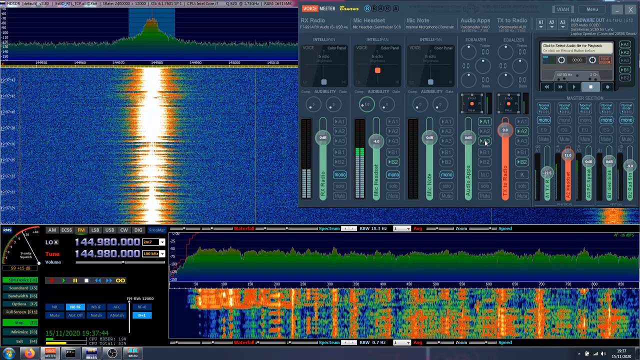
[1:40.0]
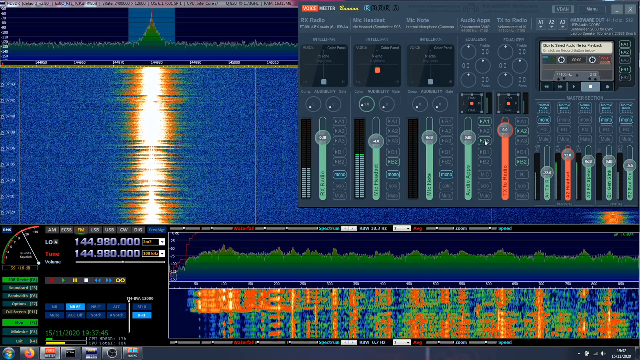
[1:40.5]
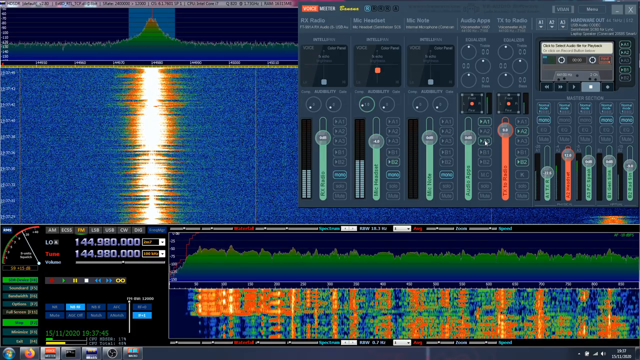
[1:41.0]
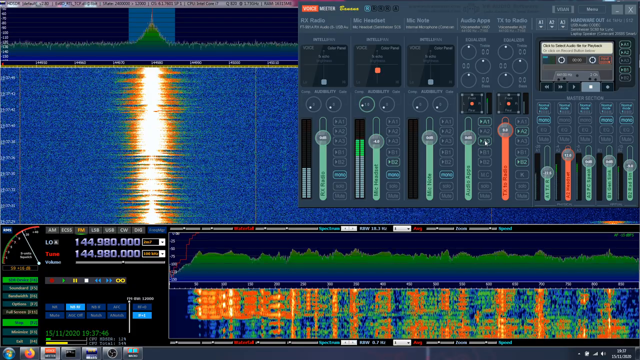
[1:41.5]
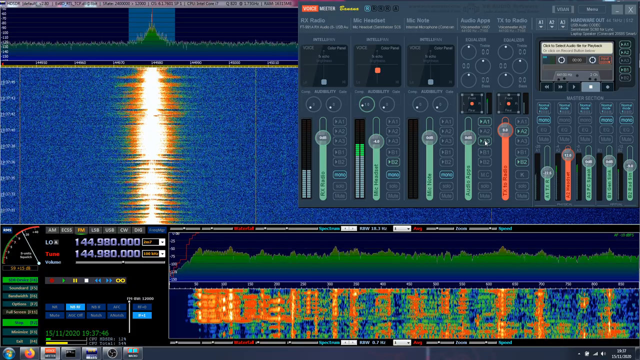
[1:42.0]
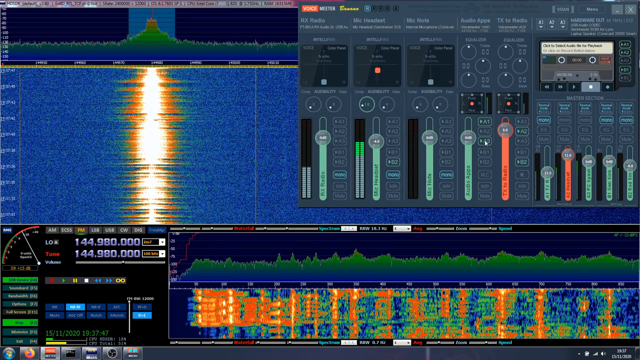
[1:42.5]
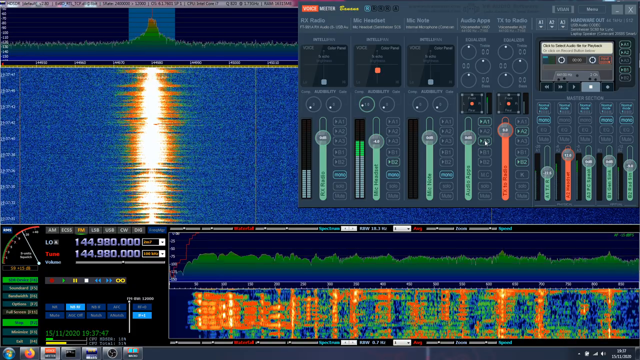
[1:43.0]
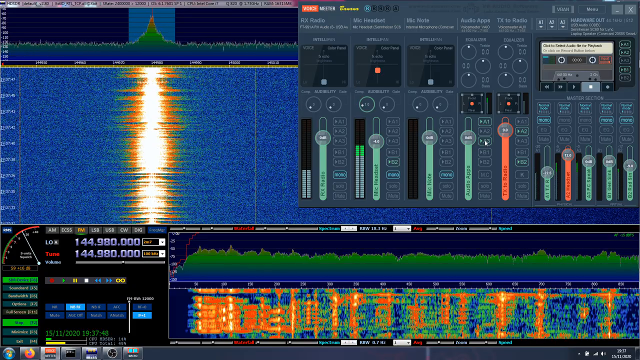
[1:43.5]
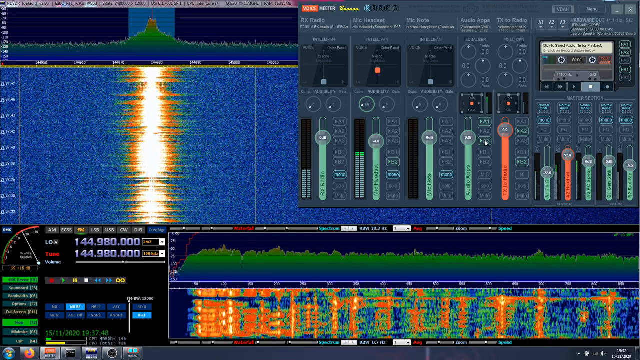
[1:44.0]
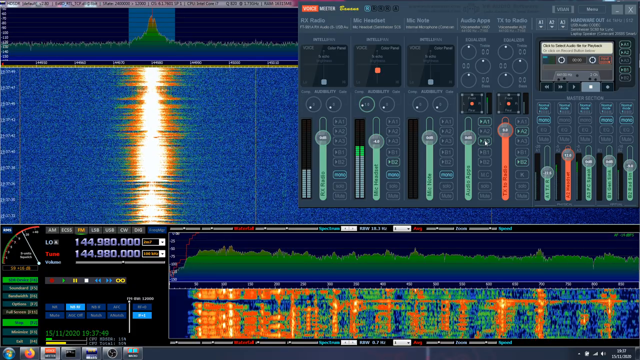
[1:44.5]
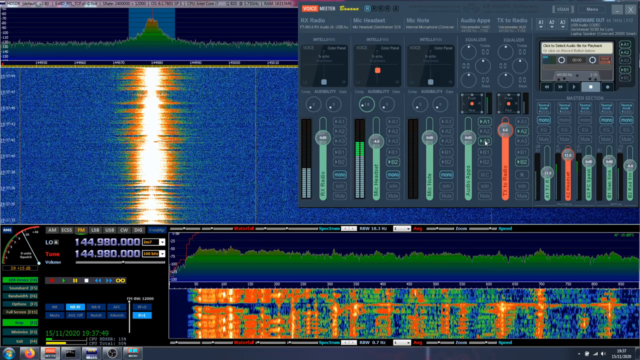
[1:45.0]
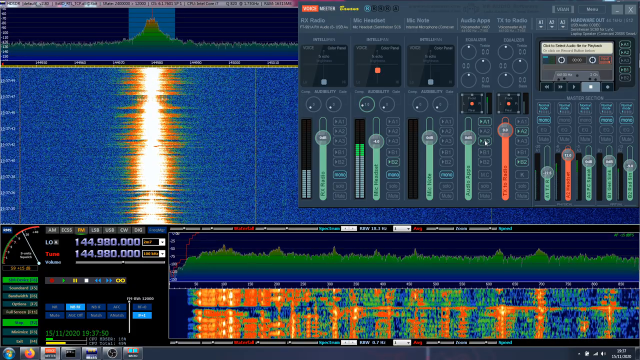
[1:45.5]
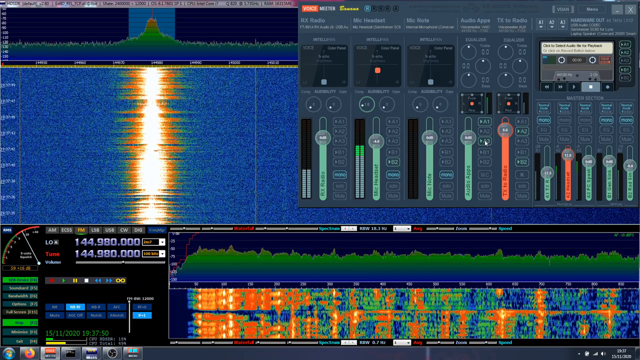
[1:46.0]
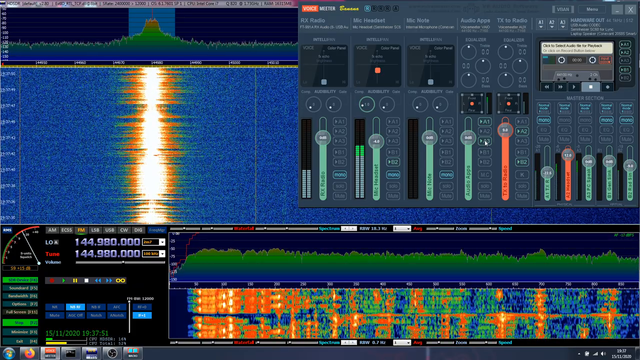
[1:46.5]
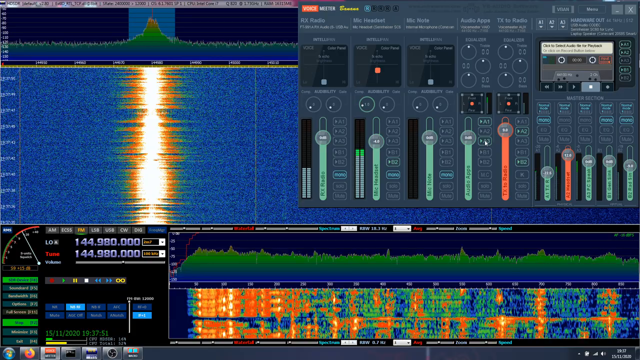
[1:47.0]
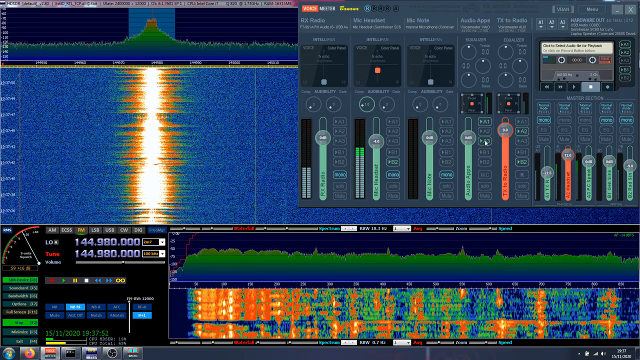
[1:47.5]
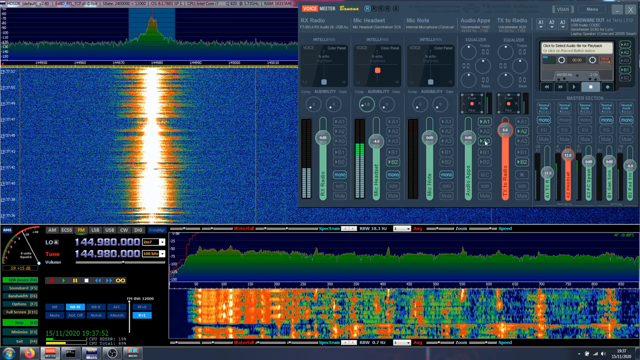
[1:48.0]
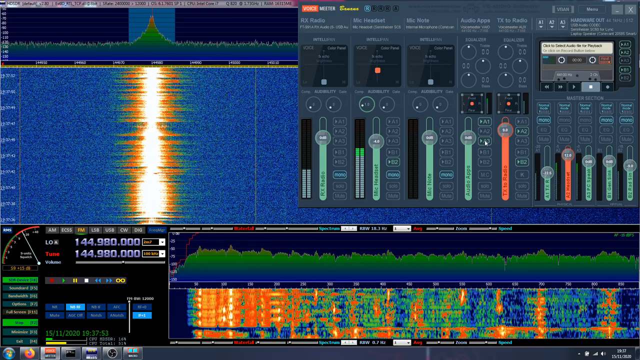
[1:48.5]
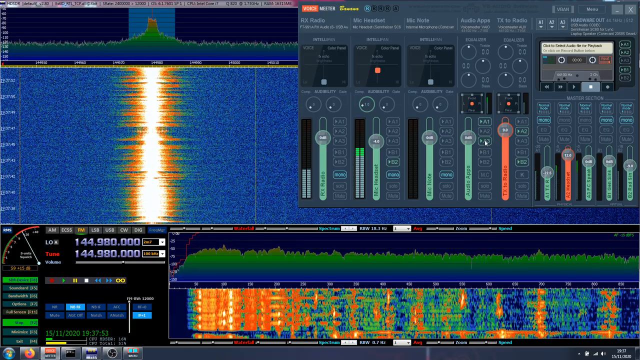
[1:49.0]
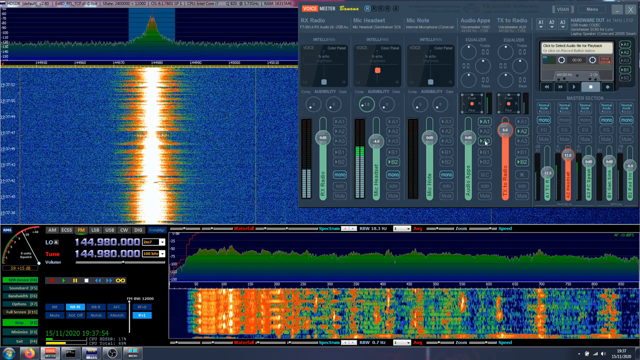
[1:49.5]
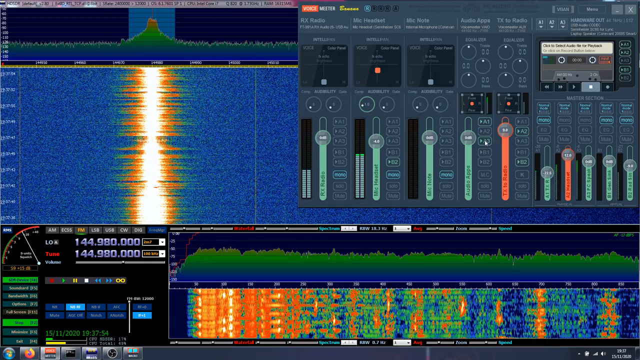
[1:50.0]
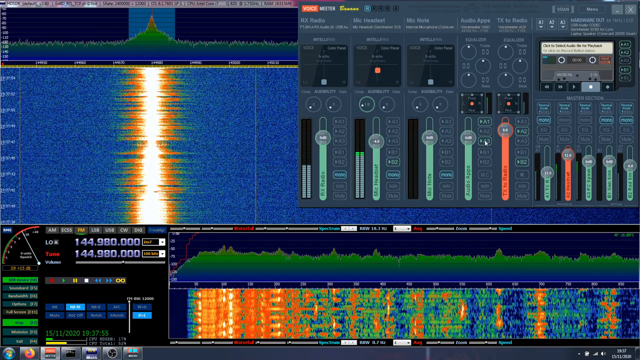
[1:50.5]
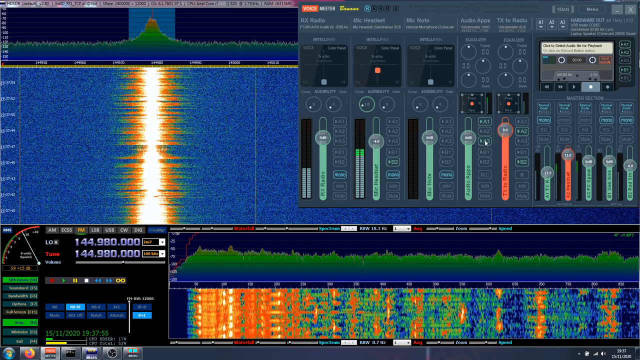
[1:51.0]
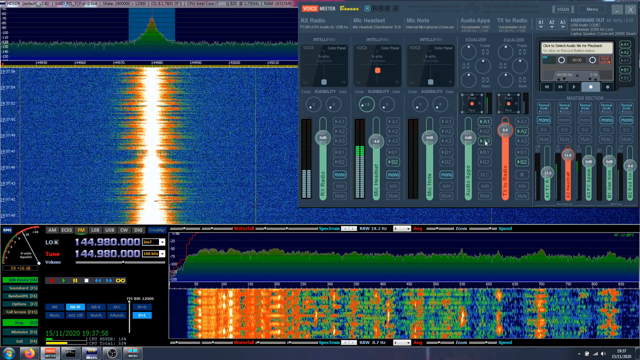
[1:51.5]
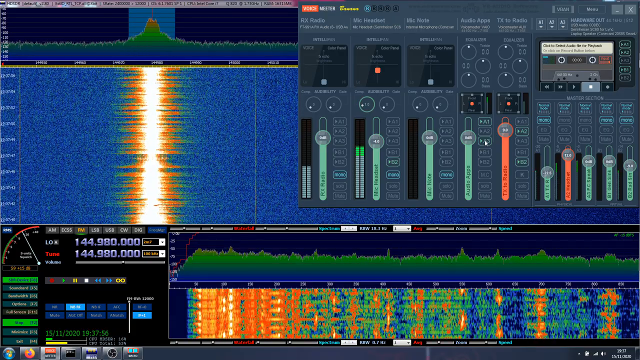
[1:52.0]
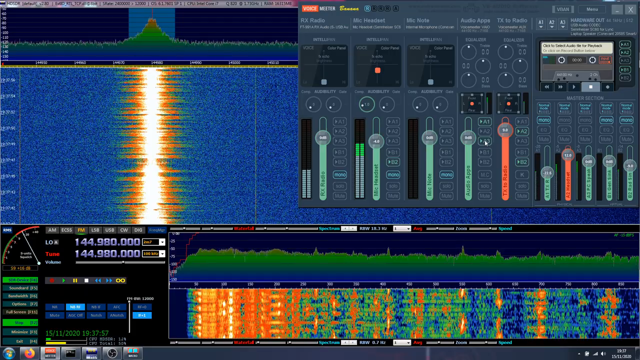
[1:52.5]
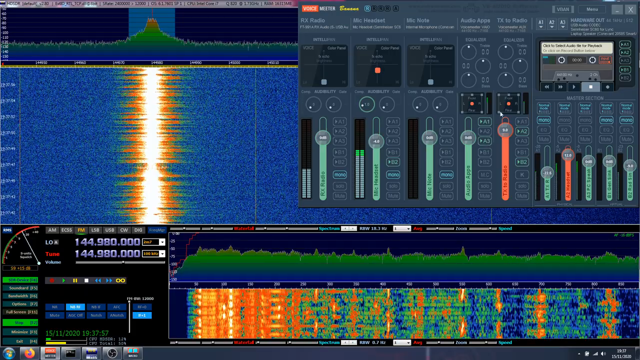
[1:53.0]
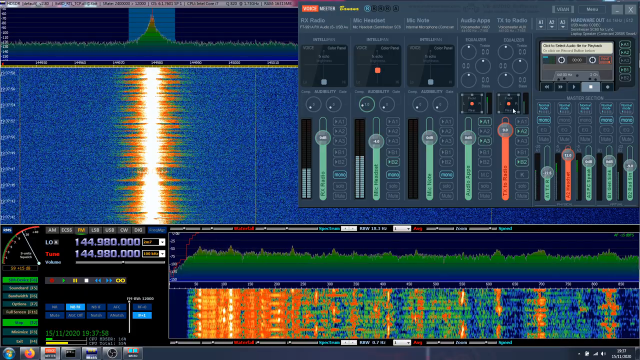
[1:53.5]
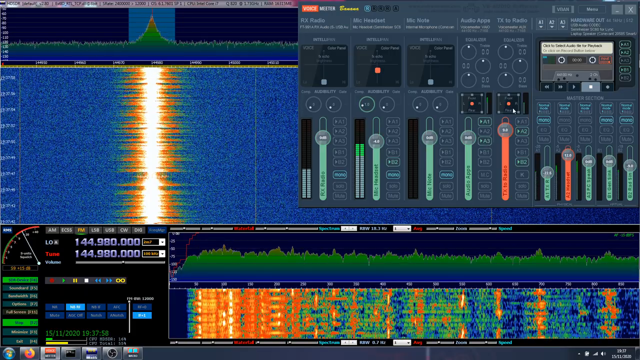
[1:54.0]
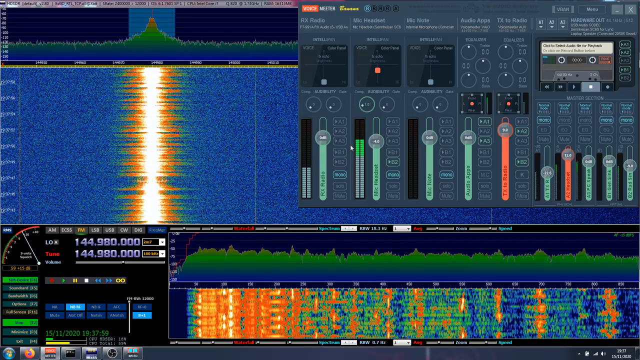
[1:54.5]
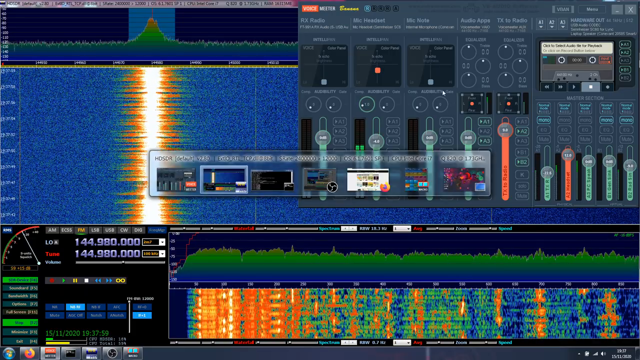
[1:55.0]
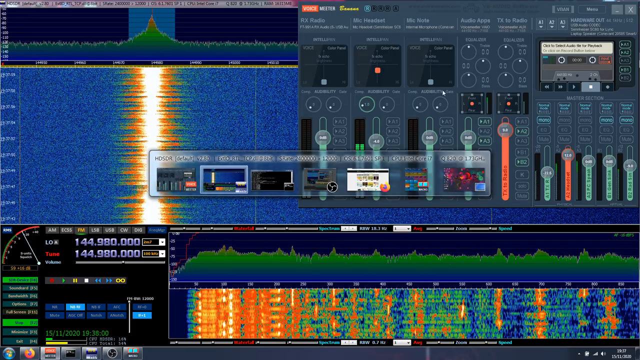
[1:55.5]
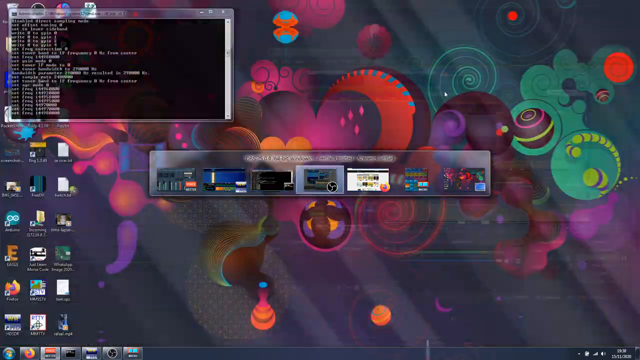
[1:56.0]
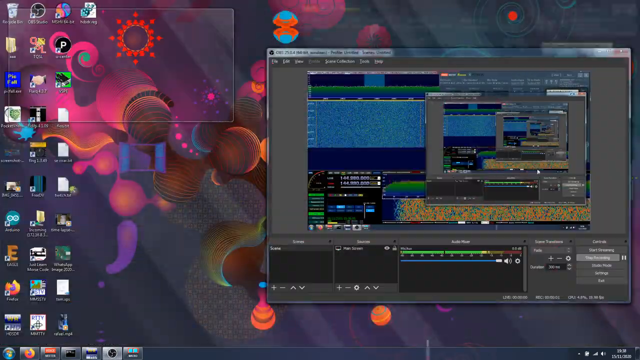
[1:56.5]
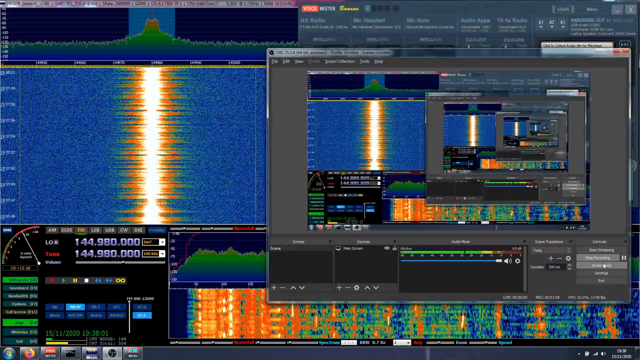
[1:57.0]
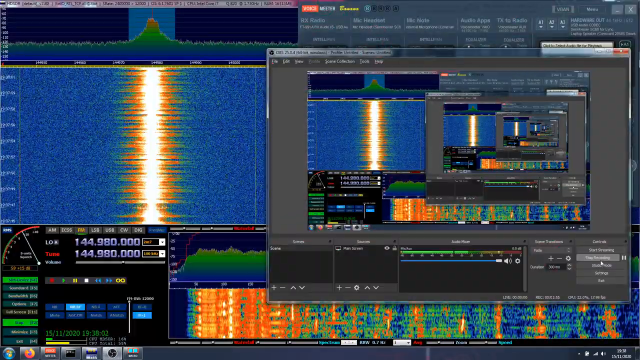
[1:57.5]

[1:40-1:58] The cassette in the top right corner turns out to be a way to master the final recording and convert it to a media format for export. The screen stays largely the same, except that the person exits the software. The specific software remains unidentified, but it is running on Windows. It is very colorful, with colors and graphics that help visualize the music and its different frequencies.